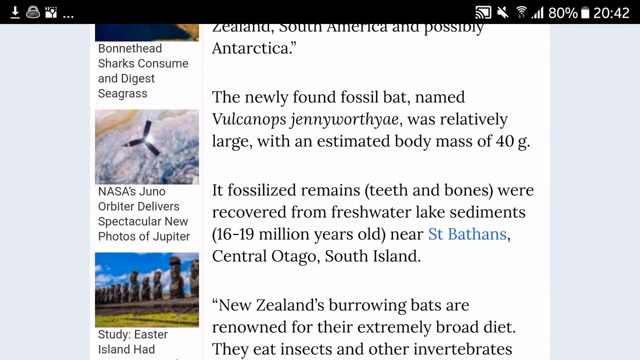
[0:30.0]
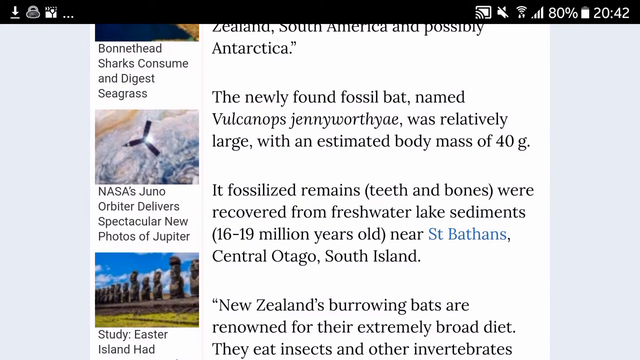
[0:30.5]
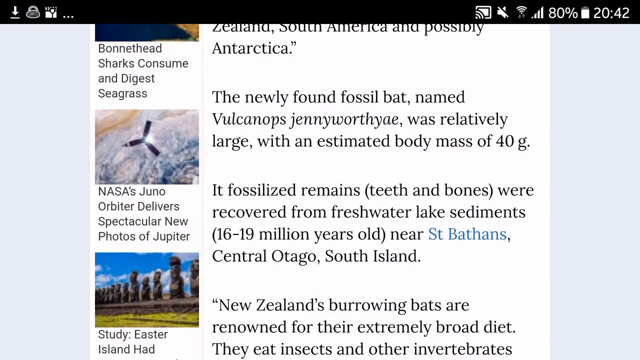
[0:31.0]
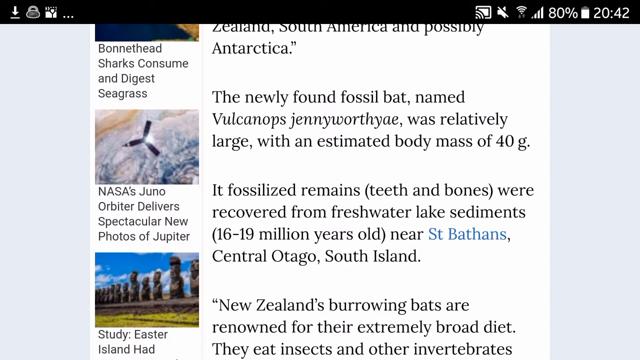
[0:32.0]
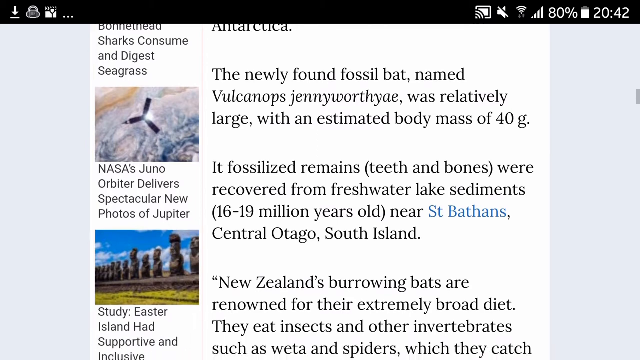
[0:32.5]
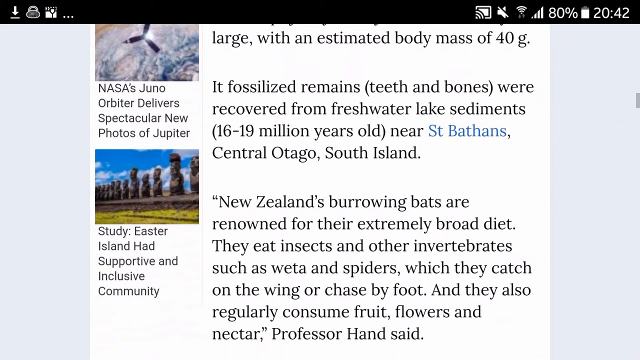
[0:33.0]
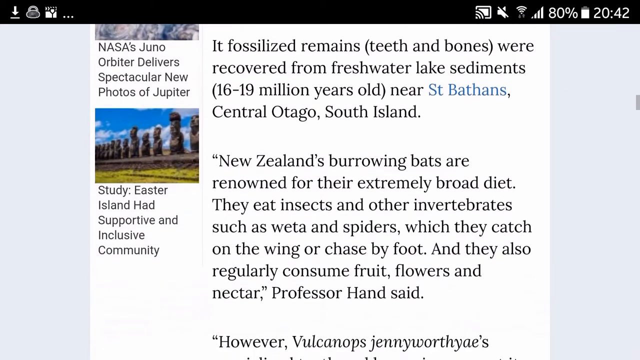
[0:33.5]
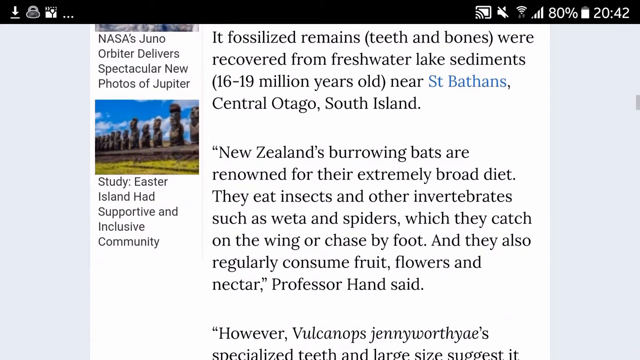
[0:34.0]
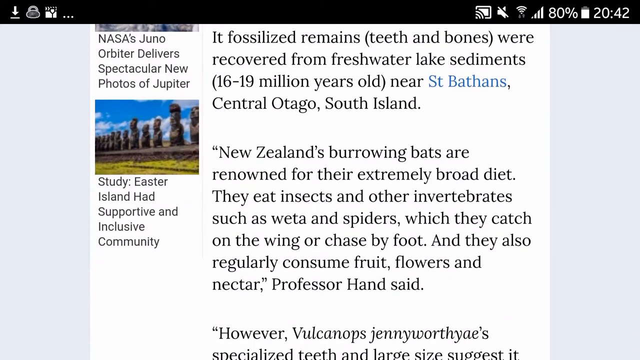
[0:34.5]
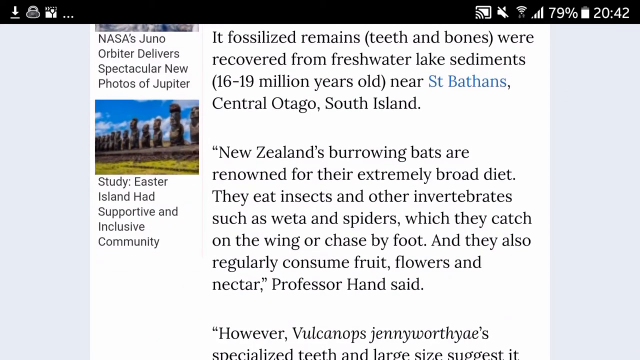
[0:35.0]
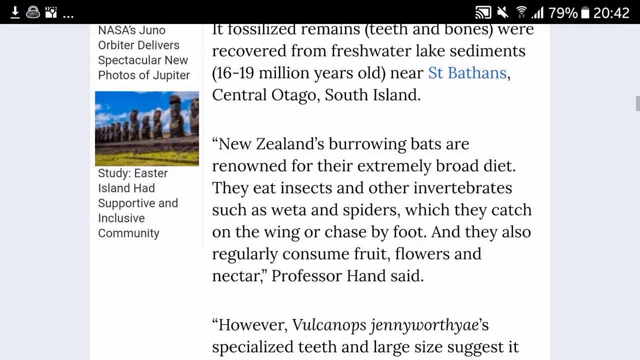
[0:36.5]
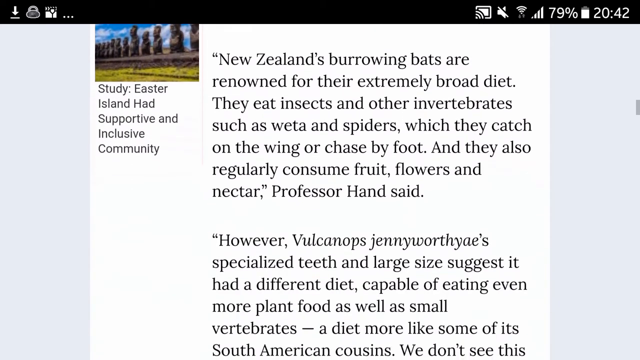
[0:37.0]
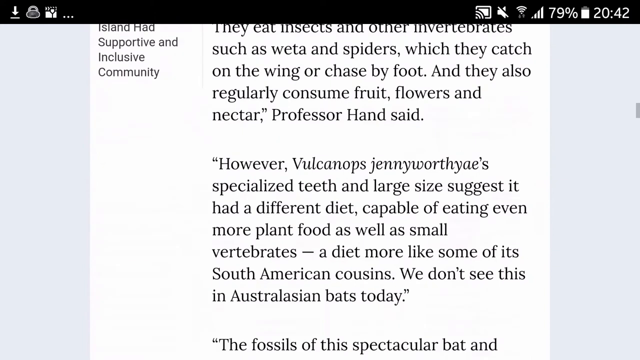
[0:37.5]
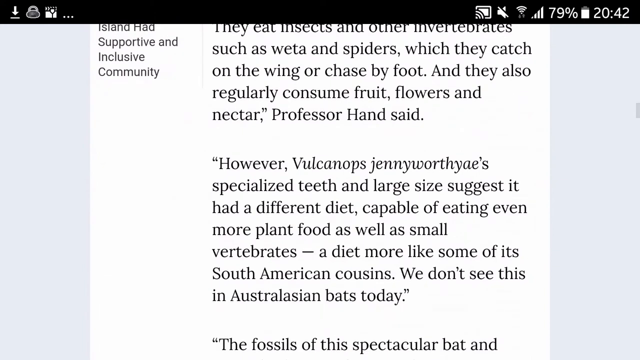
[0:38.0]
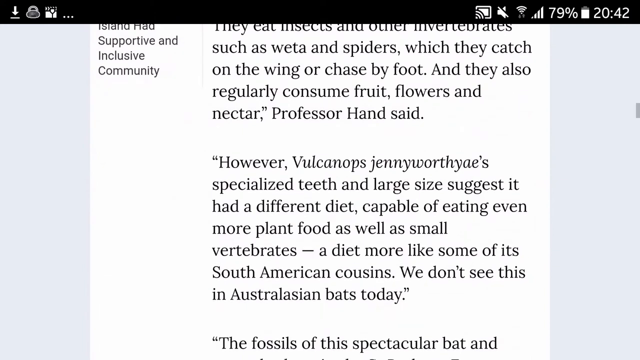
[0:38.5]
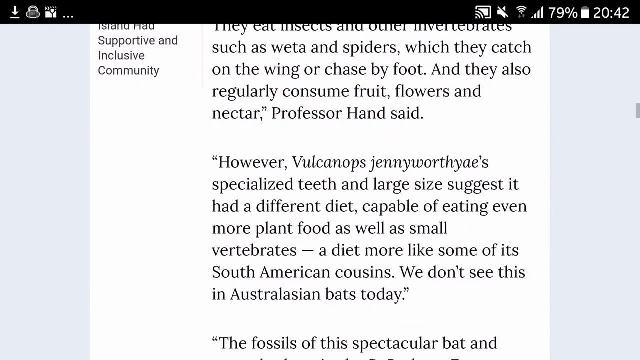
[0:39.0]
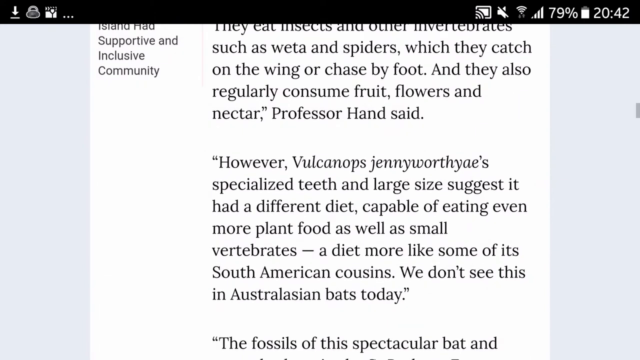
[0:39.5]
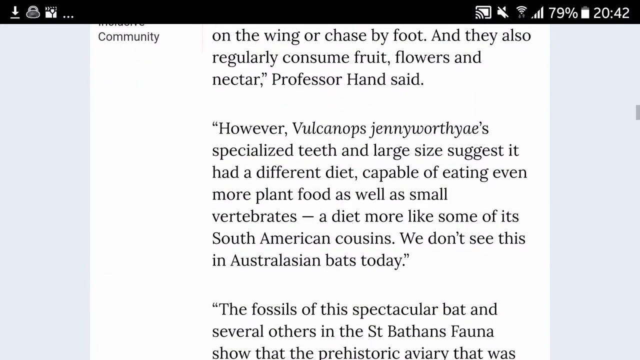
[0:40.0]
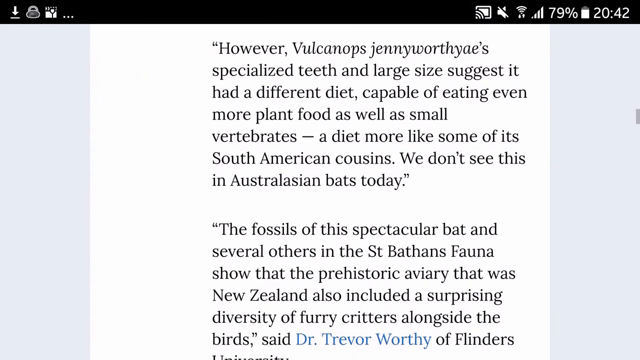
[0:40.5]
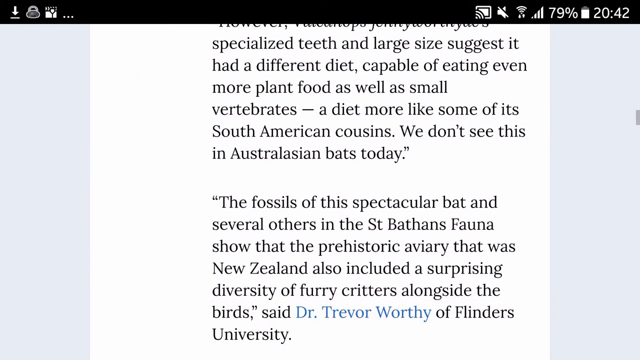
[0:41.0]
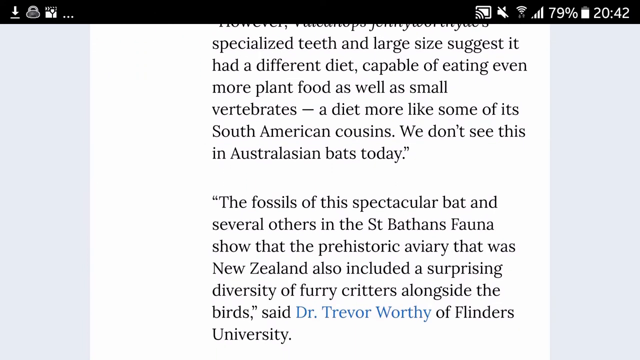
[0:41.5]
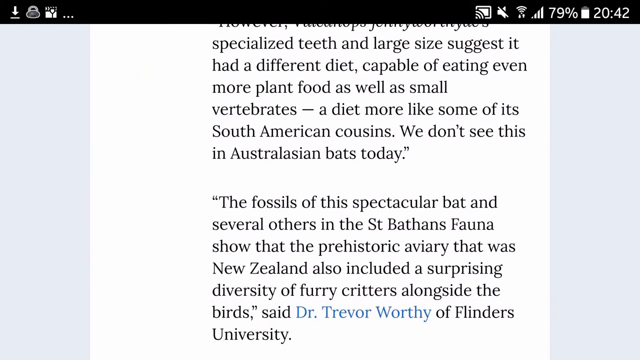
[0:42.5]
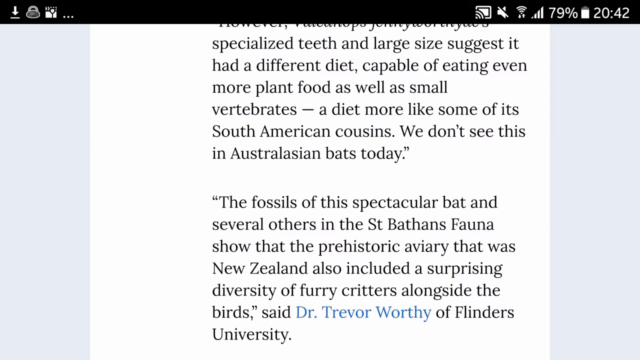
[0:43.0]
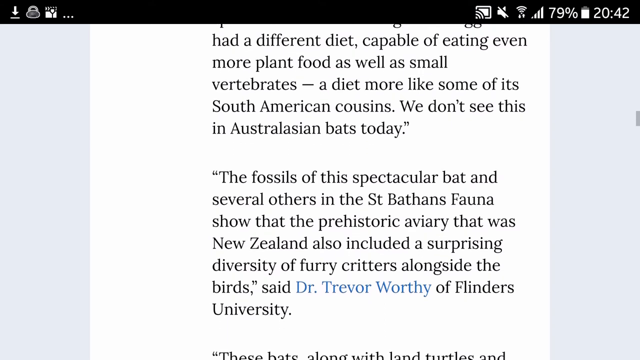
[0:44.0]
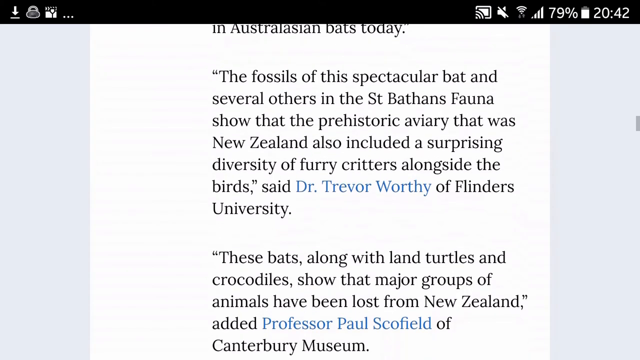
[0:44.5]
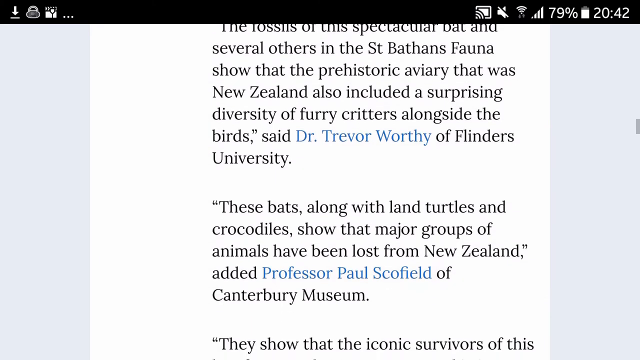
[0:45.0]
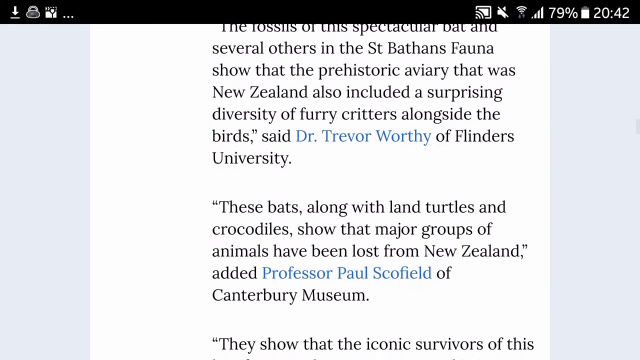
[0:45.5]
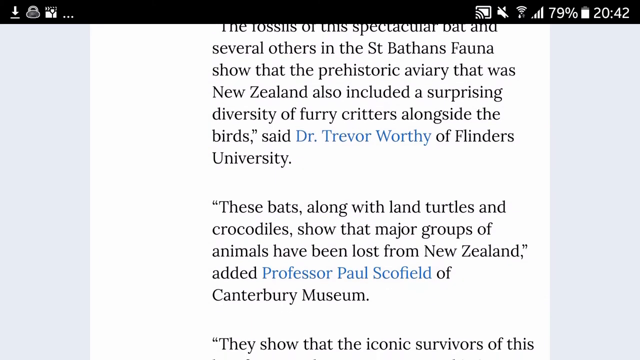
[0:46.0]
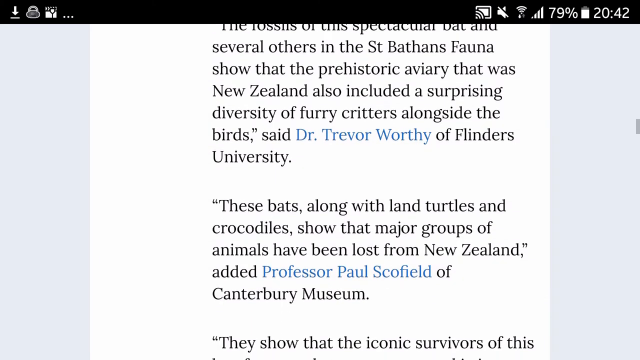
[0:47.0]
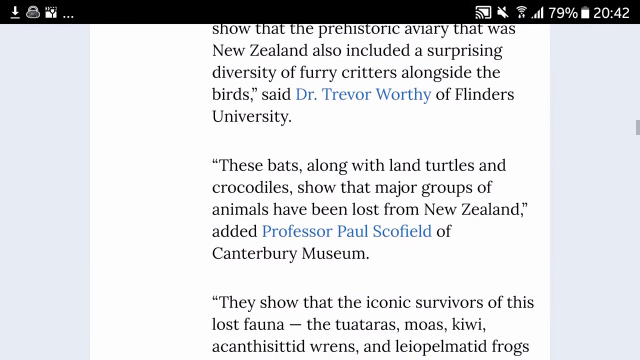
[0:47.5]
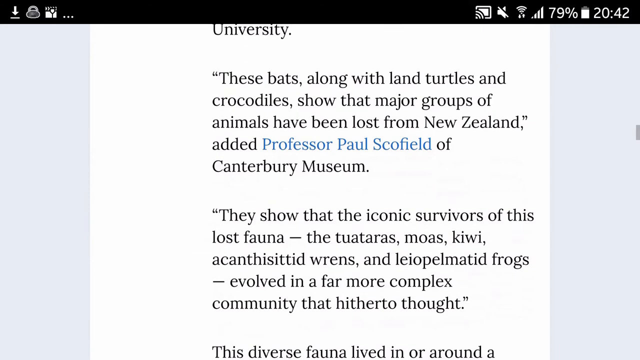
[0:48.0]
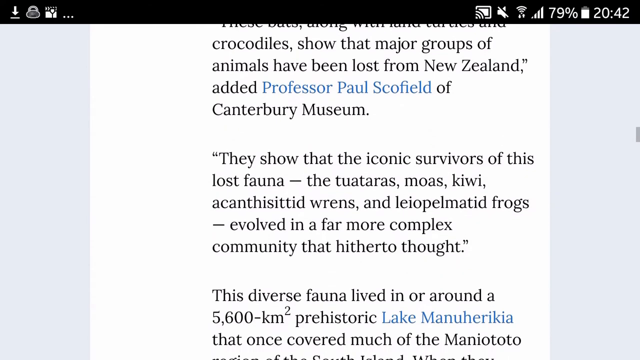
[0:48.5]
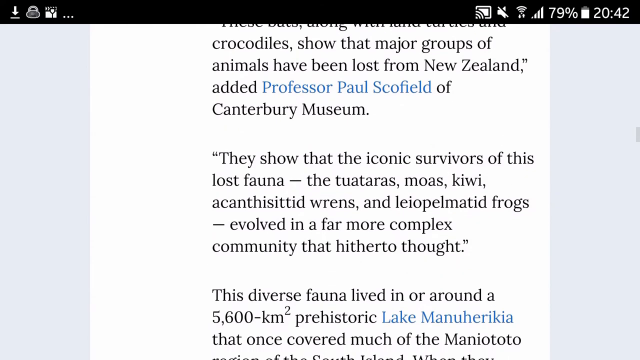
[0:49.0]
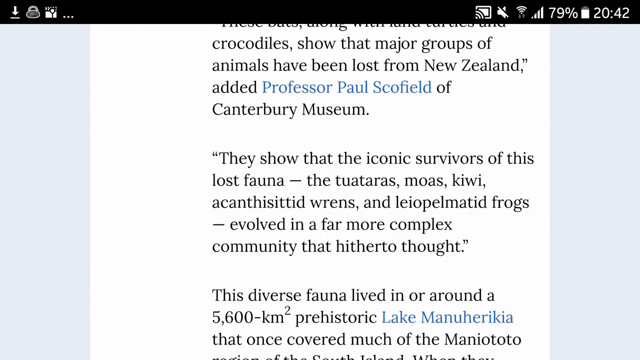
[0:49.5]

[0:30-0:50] The view is a close-up of the computer screen. A download button is in the upper left corner, and on the right side the screen shows 80% battery power left and the time 20:42. The page keeps scrolling down through the article. A quote attributed to Professor Hand says that New Zealand's burrowing bats are renowned for their extremely broad diet: they eat insects and other invertebrates, such as weta and spiders, which they catch on the wing or chase by foot, and they also regularly consume fruit, flowers, and nectar. Further down, the text states that fossilized remains, teeth and bones, were recovered from freshwater lake sediments 16 to 19 million years old.